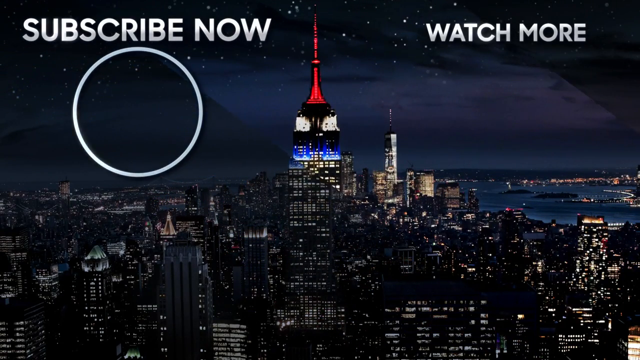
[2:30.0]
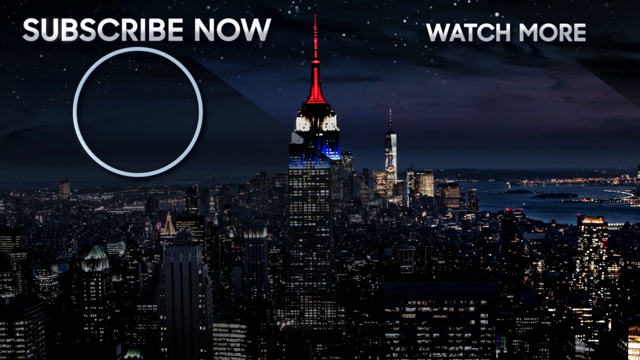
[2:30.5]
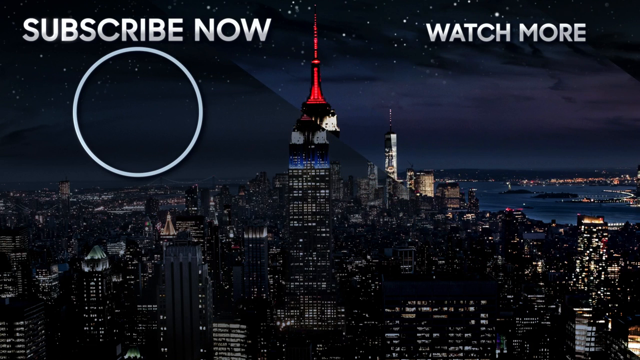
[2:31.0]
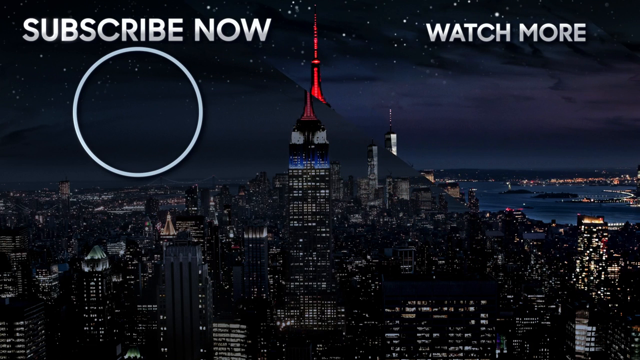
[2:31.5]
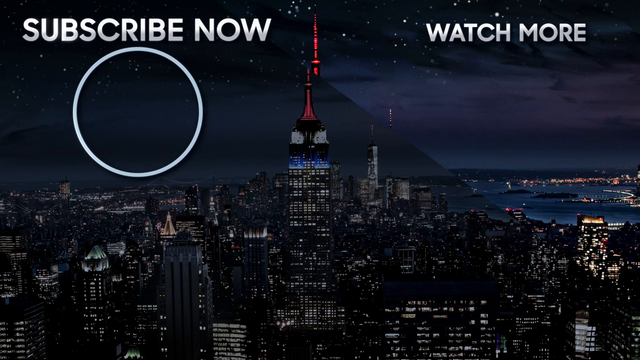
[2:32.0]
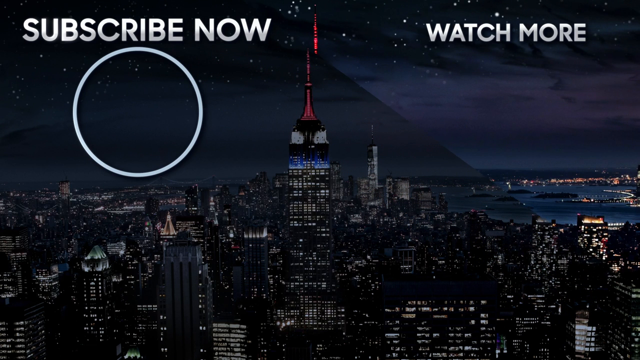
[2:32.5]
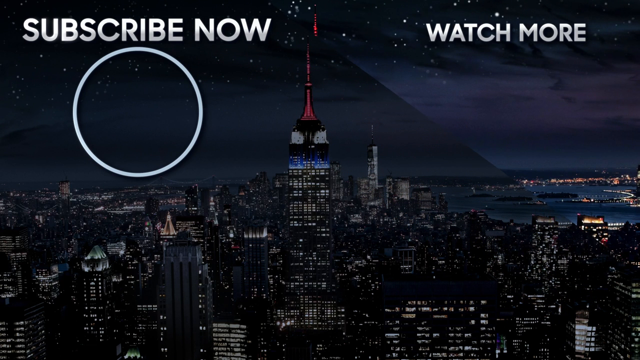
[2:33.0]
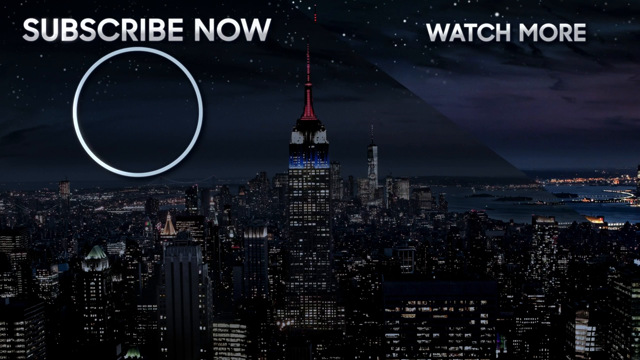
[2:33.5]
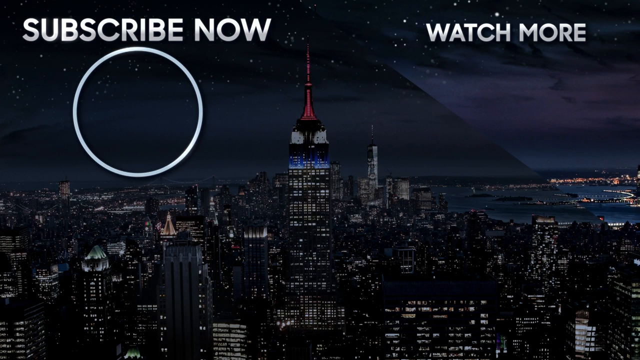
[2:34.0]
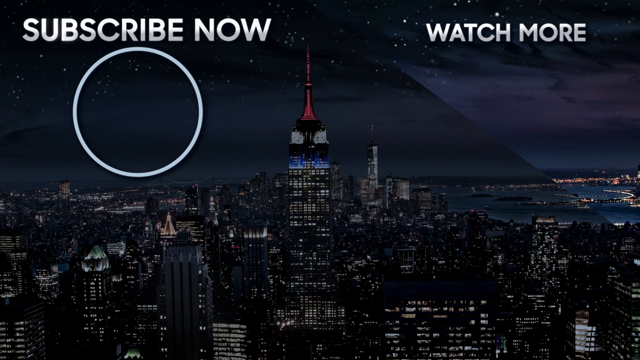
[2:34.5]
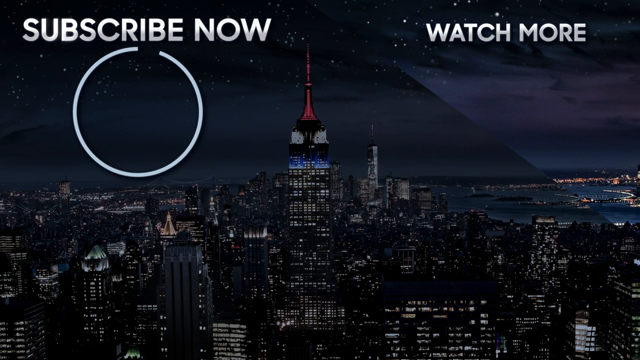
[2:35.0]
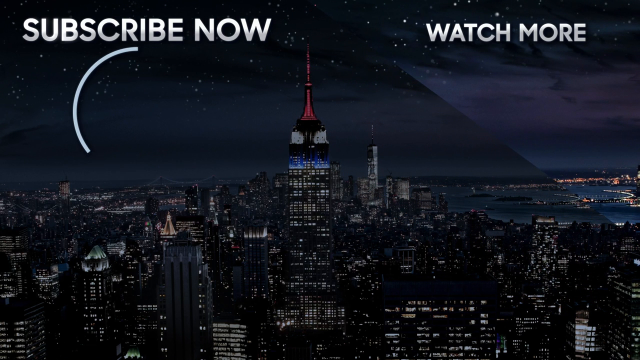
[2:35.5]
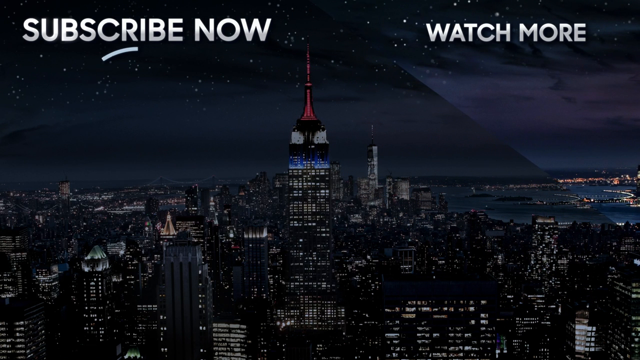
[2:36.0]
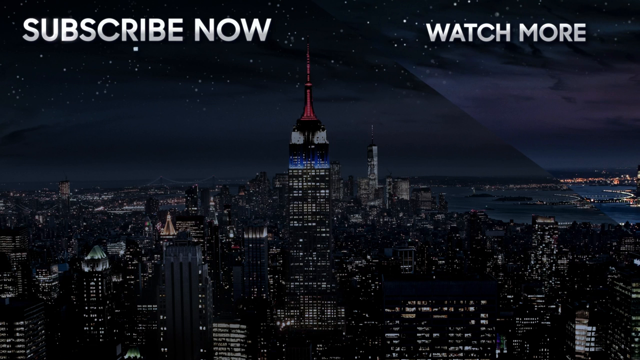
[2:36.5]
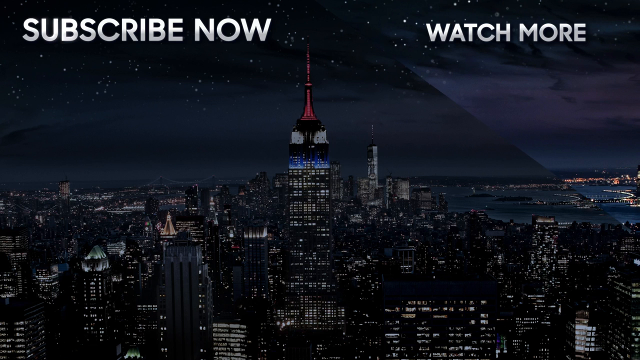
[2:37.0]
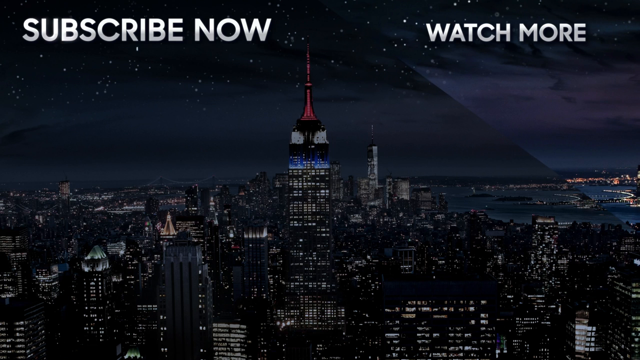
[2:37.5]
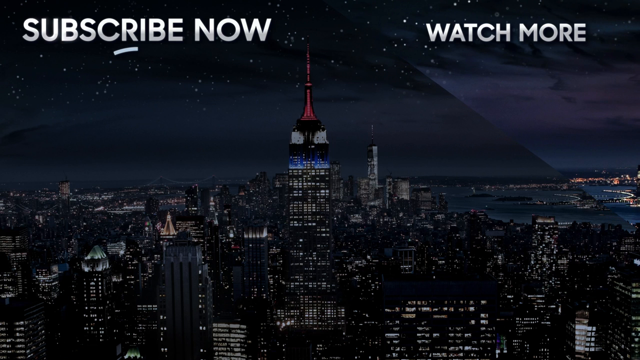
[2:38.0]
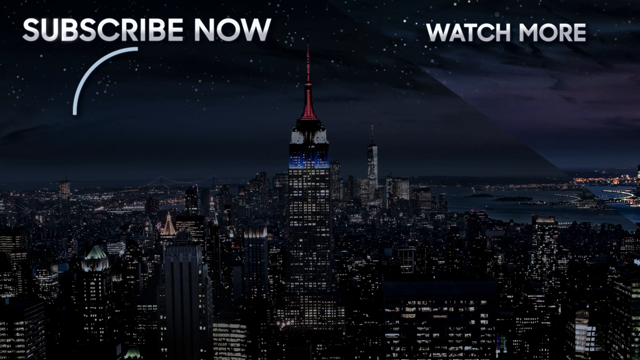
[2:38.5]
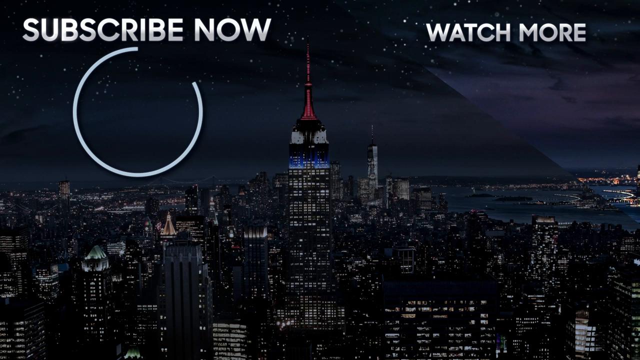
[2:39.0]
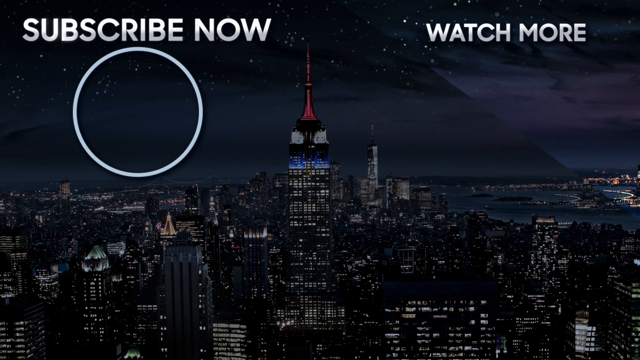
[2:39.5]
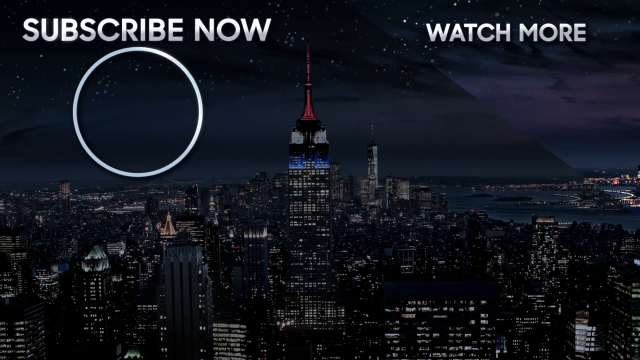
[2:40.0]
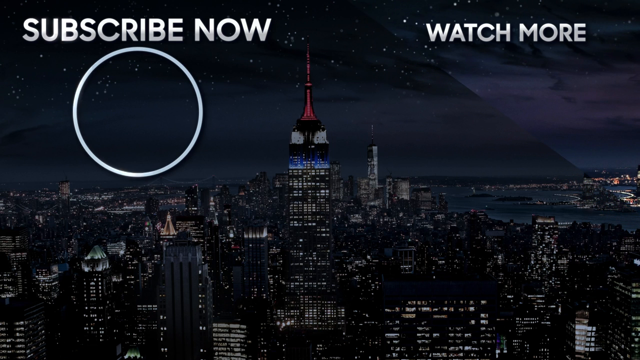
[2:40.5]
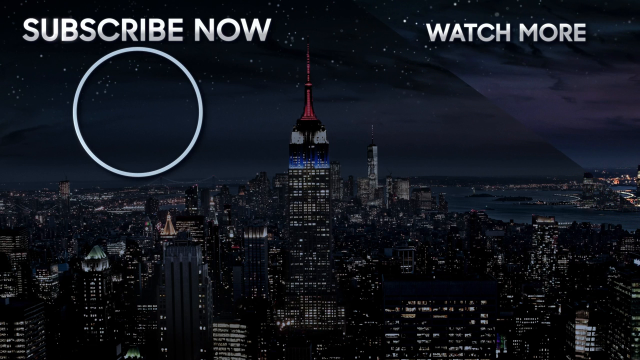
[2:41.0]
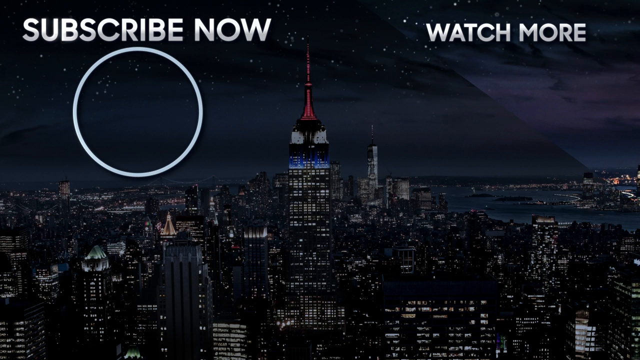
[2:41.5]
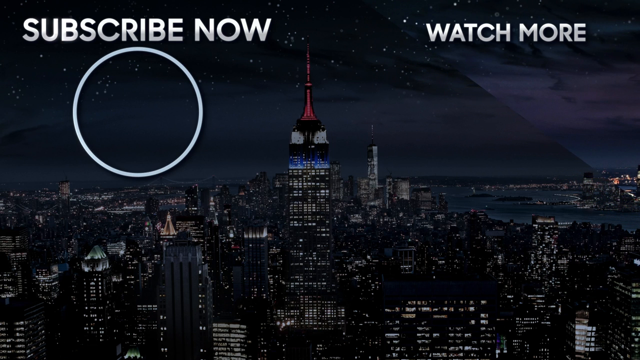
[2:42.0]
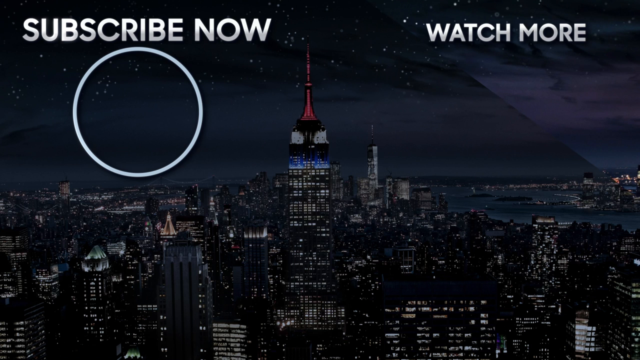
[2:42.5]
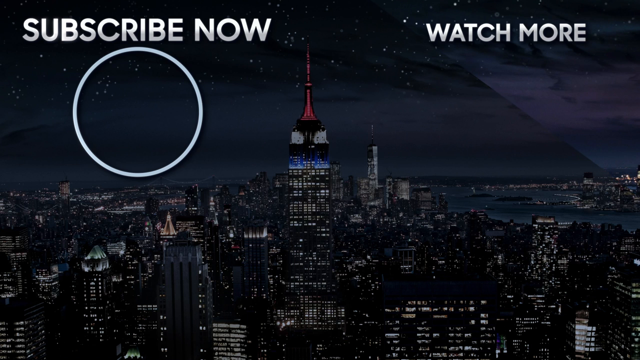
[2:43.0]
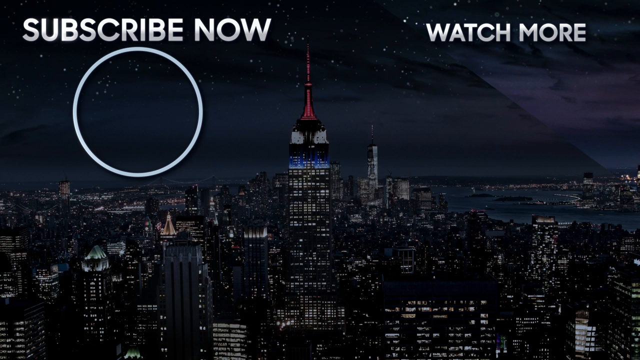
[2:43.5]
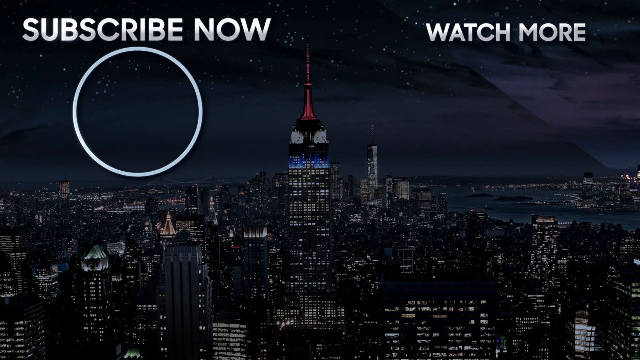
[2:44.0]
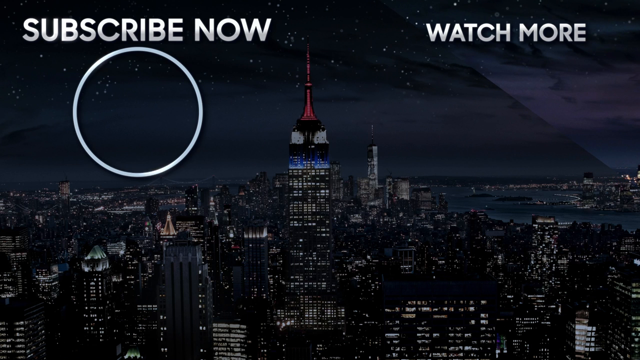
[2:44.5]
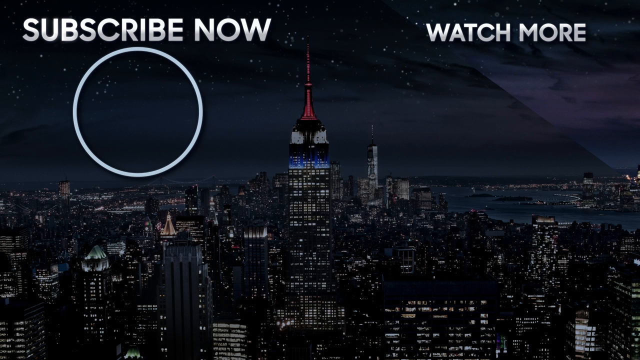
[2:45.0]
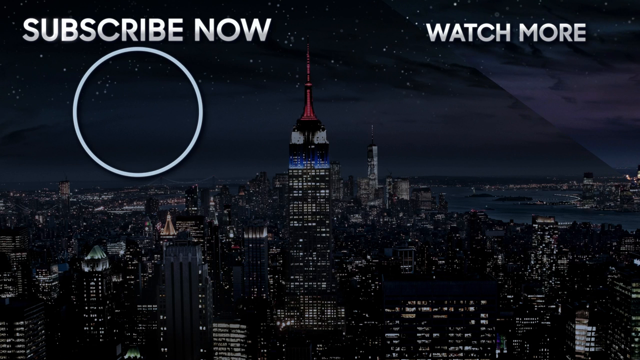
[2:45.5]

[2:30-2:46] The end of the show appears, with the text "subscribe now" on screen and three boxes, one on the left and two on the right, each a video that can be clicked. The left box says "Naomi Watts introduces Jimmy to her hundred and fifty pound co-star" and has a picture of a dog. The top right box says "Jimmy makes up for his SNL 50 intro of Mumford" and shows him sitting at his desk with a guest next to him. The bottom box says "Tom Segura's six-year-old and nine-year-old are menaces" and has a close-up picture of Tom Segura. The background shows a city at nighttime, with stars in the sky above and a tall building in the middle lit up on all floors, with a red point going up at the top.